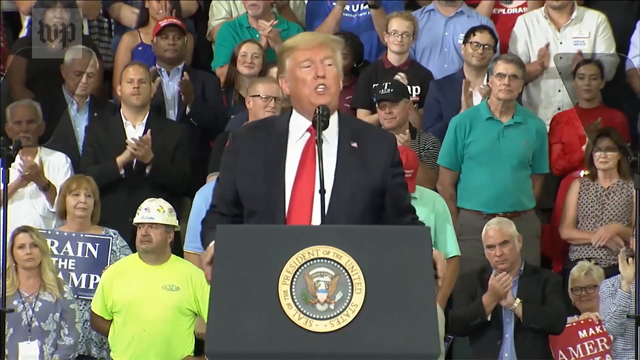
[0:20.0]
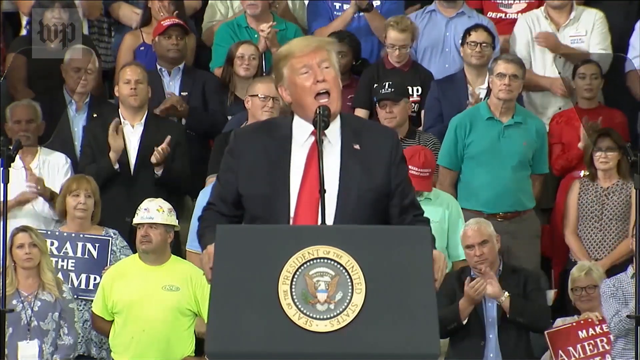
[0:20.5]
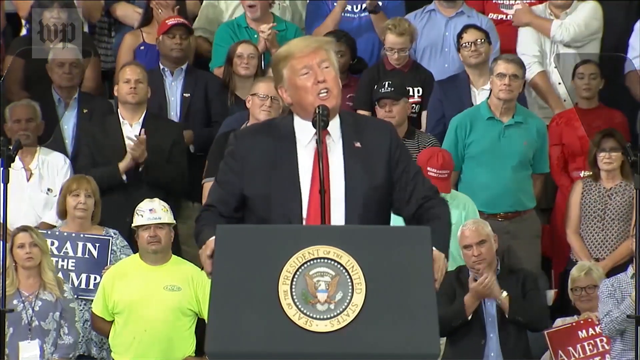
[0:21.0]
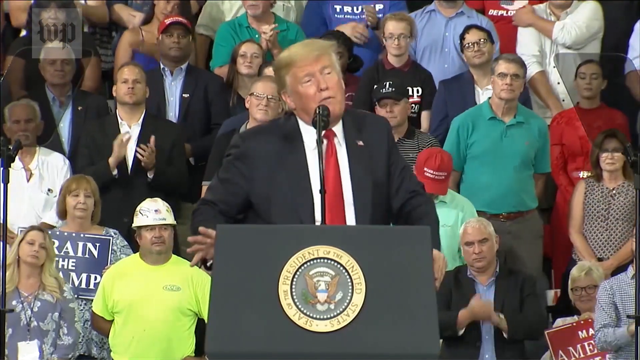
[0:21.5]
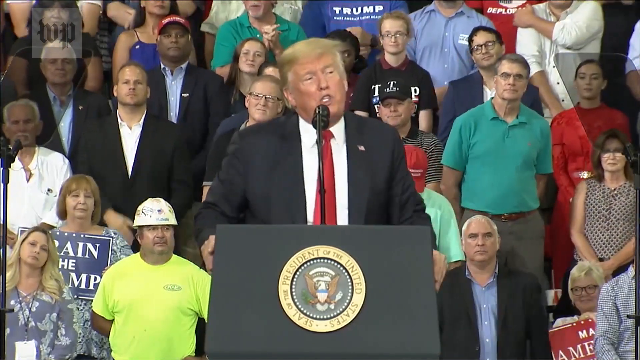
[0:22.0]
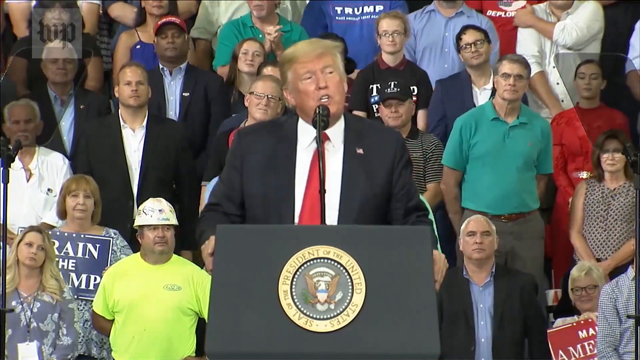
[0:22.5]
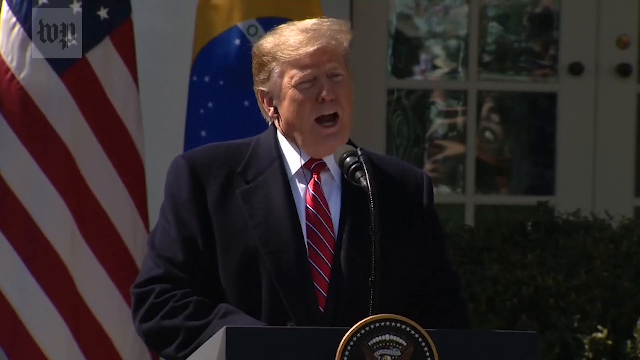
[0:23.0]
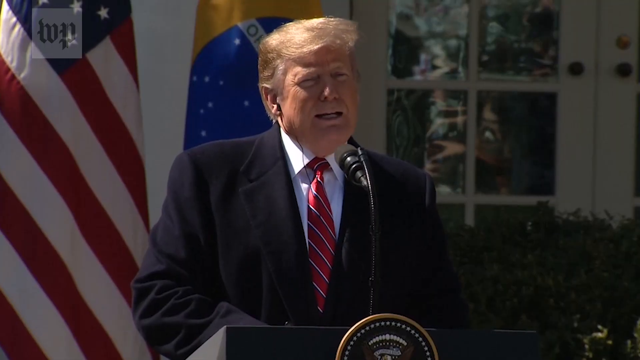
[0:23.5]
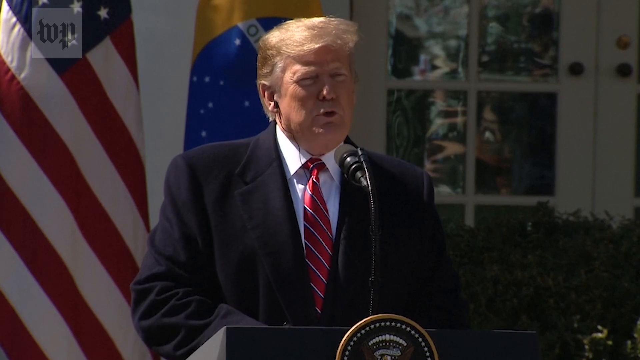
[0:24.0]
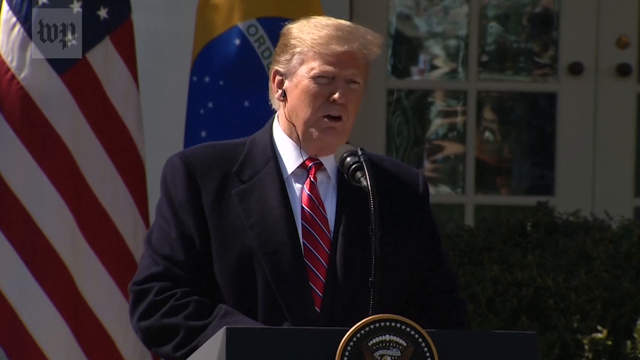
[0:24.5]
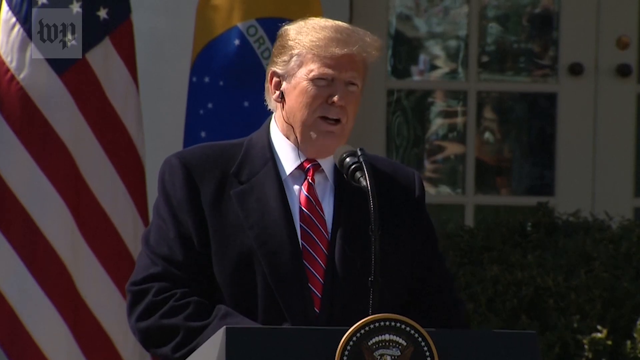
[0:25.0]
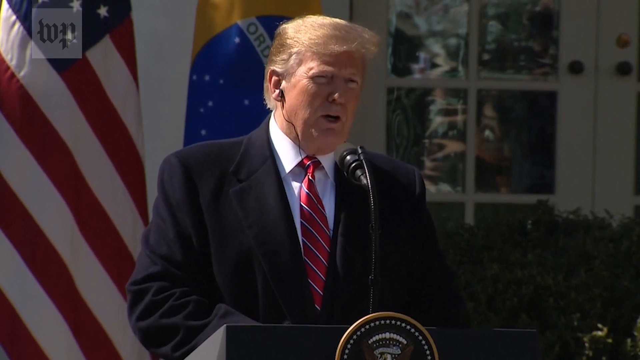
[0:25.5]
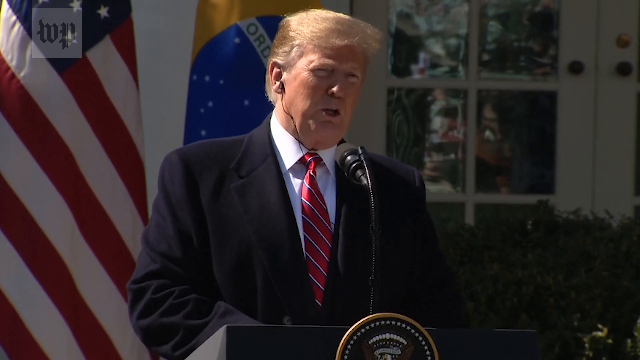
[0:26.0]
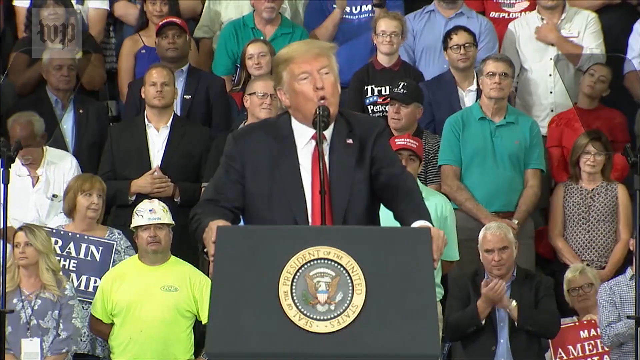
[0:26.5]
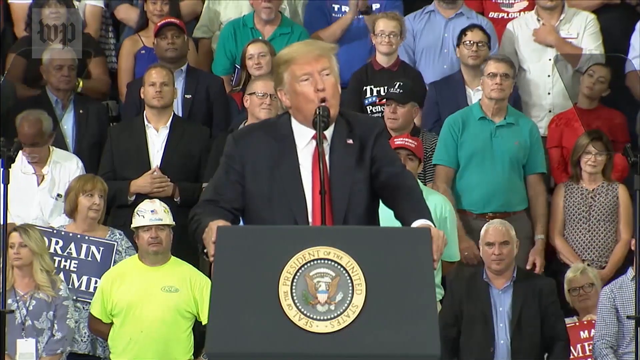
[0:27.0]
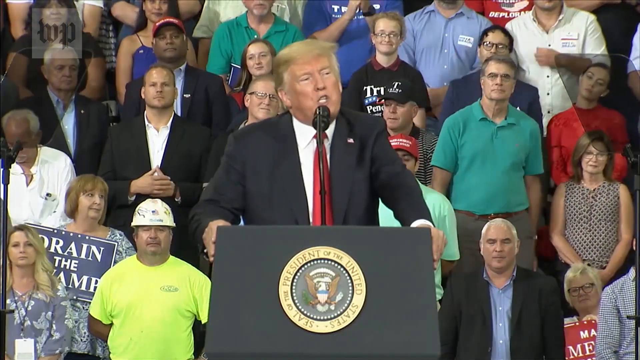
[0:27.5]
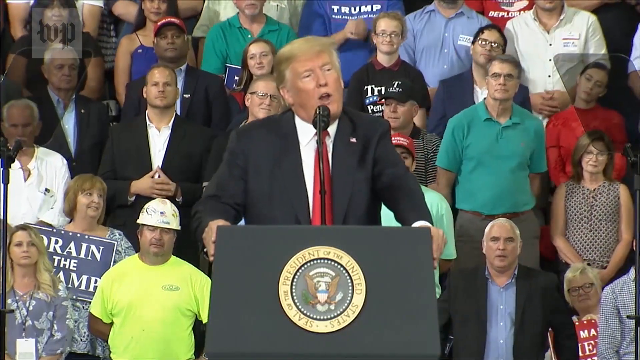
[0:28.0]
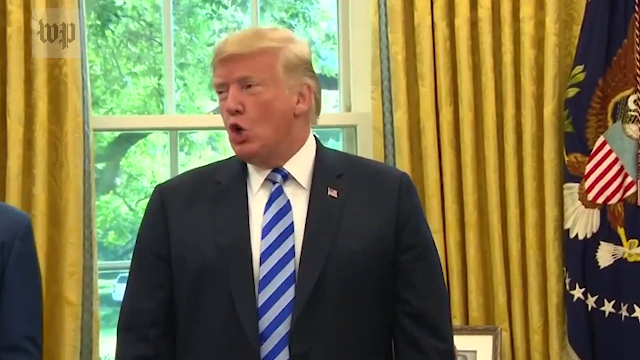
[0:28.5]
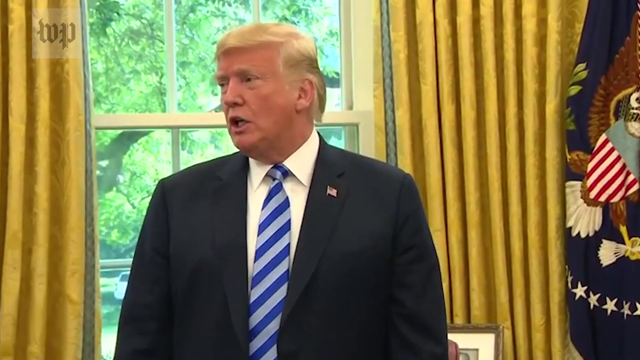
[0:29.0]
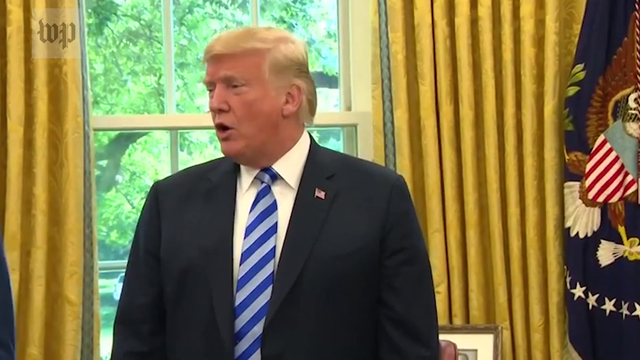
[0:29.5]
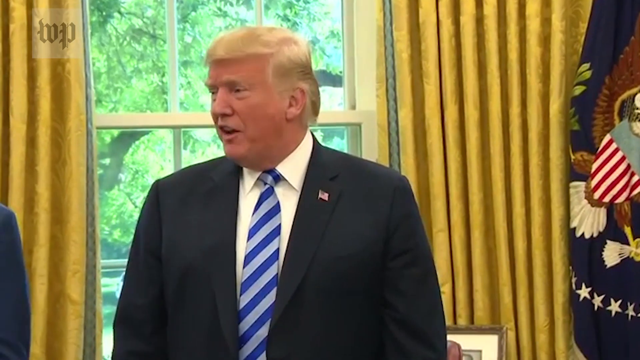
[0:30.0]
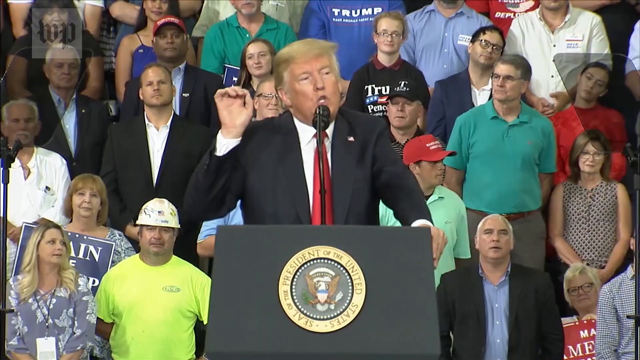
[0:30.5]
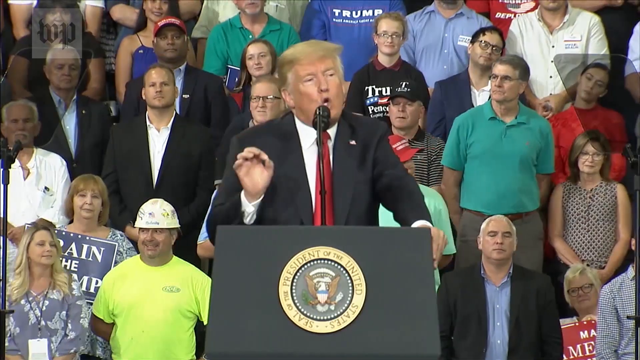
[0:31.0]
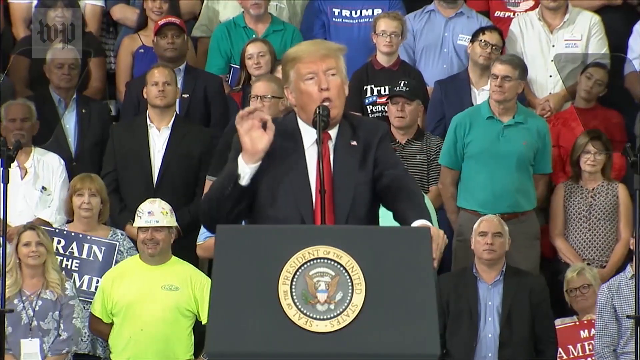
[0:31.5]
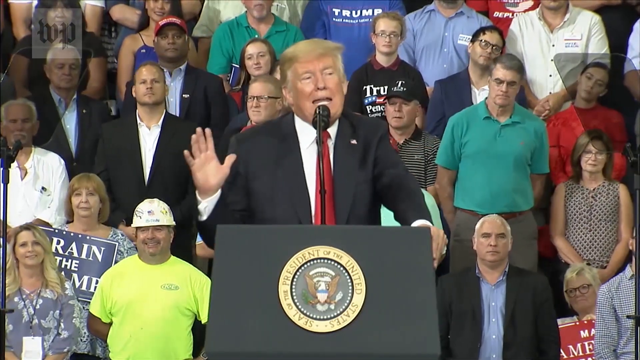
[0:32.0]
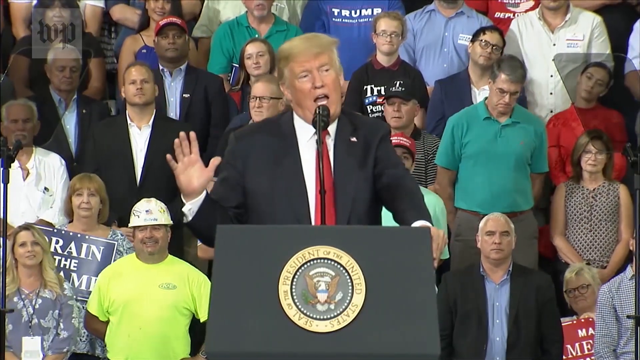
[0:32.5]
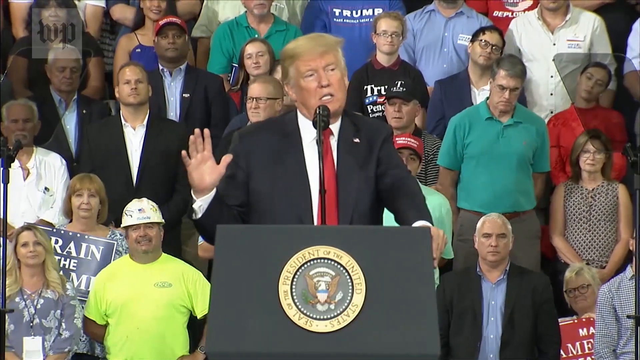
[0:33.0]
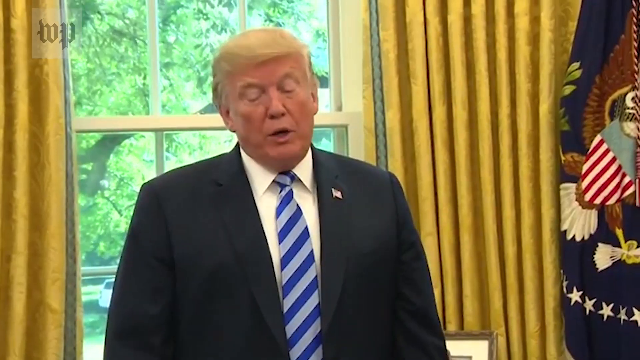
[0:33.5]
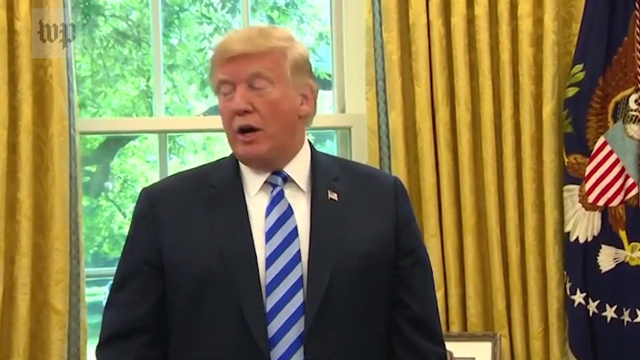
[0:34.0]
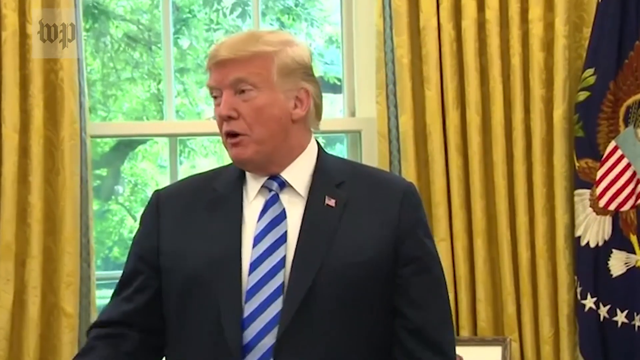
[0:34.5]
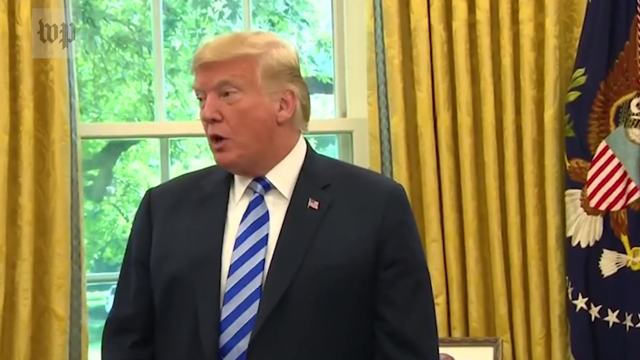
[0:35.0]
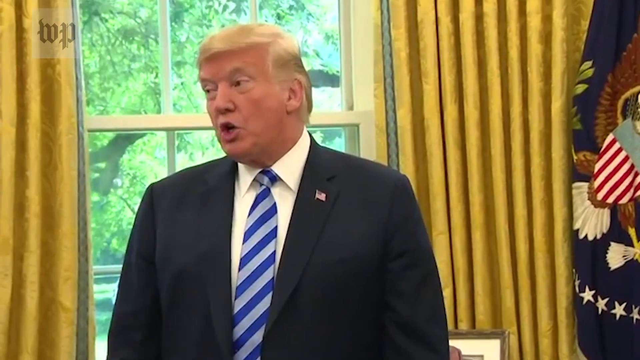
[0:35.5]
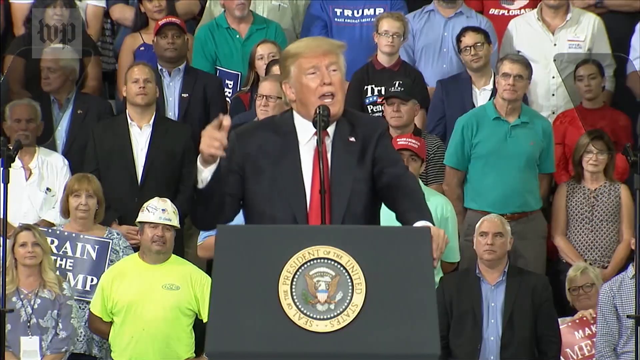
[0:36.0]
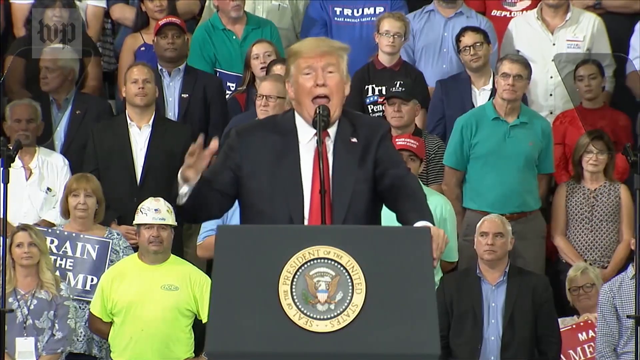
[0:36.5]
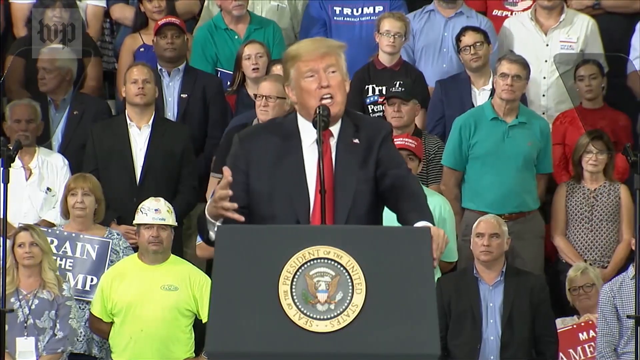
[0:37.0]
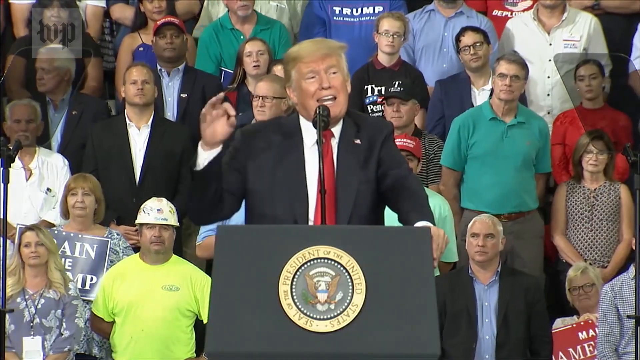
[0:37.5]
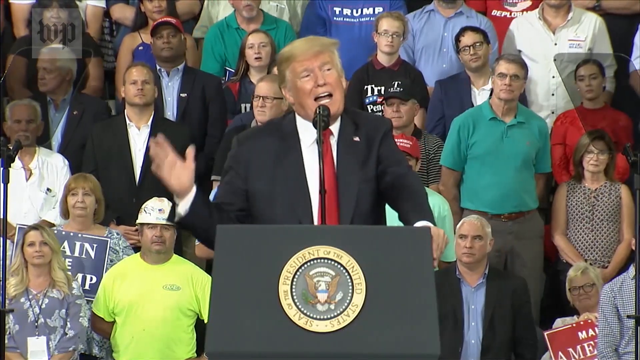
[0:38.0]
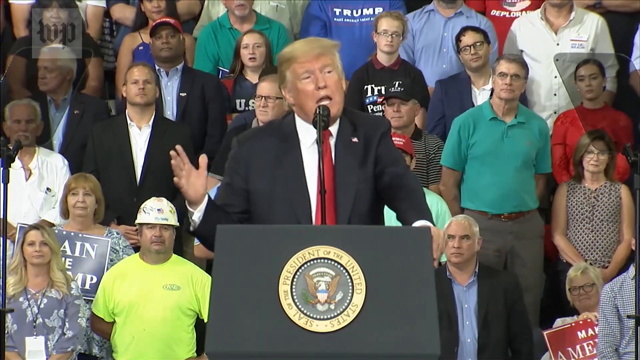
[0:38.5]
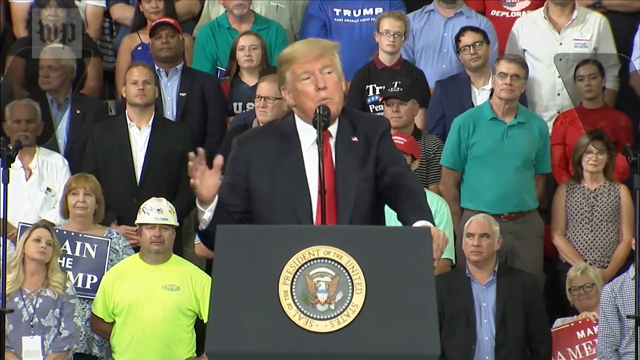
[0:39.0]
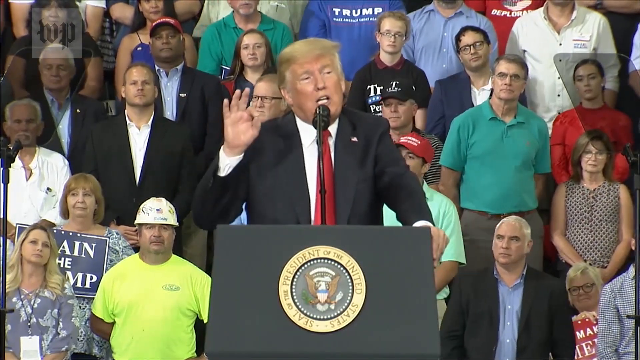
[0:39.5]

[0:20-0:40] Trump stands at a pulpit, talking, wearing a red tie, with a couple of people still behind him. The video then moves to him in the White House, making his speech. He has blonde hair and at one point has an earpiece in his ear. In the outdoor setting he wears a black jacket, a white shirt and a red tie; in the White House he wears a black jacket, a white shirt and a blue tie, with the American flag beside him. The people standing behind him are a different set of people, some old, some middle-aged and some young; they are just standing and look like his fans. The letters "WP", the logo of the channel hosting the video, are at the edge of the screen. The mic he speaks into is black, and the pulpit is also black, with "The seal of the president of the United States" written on it.